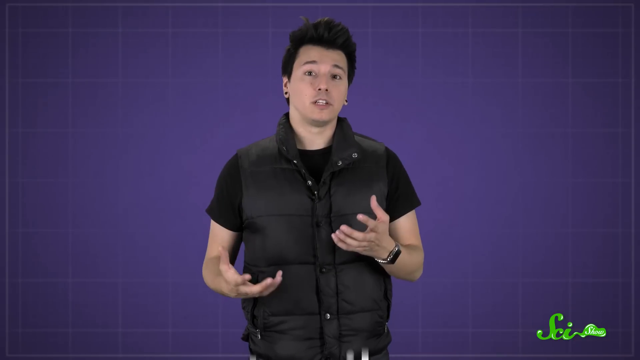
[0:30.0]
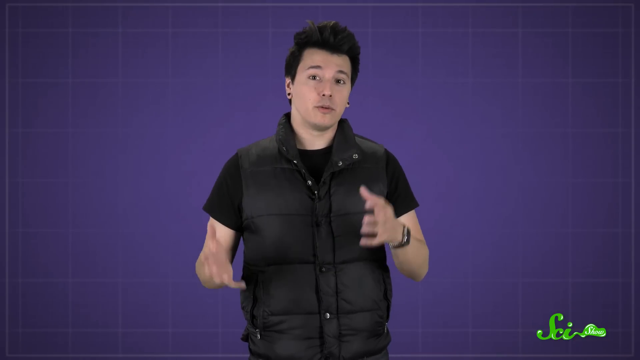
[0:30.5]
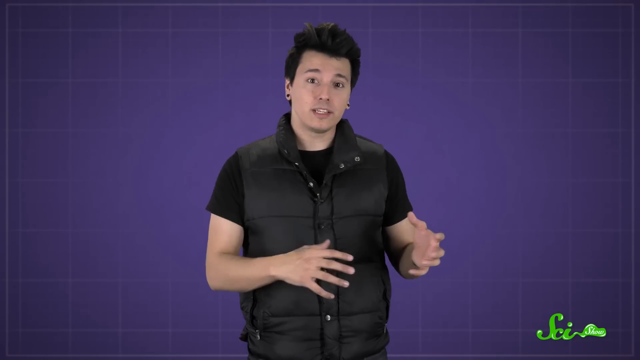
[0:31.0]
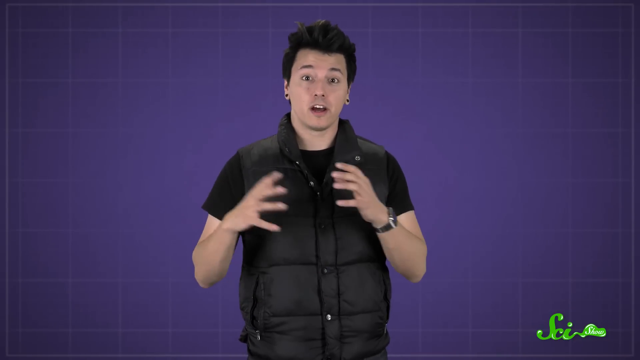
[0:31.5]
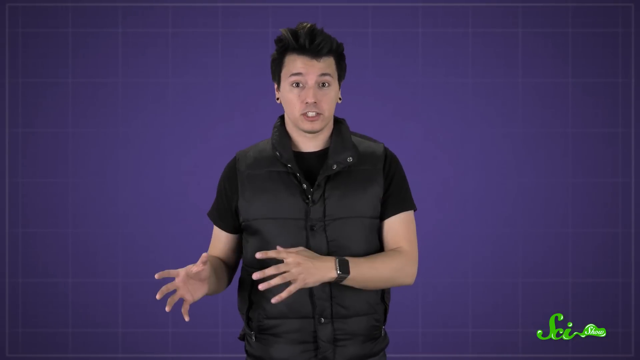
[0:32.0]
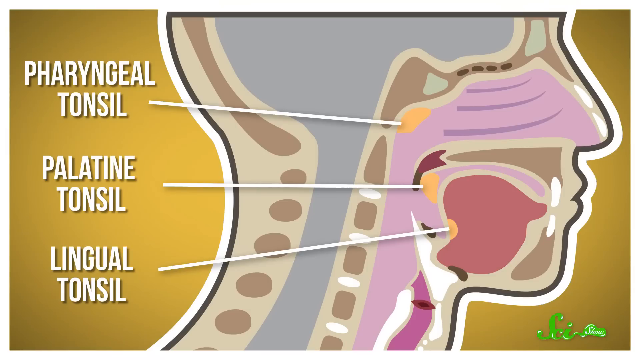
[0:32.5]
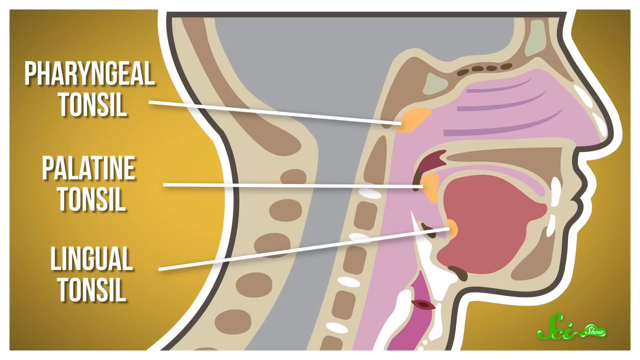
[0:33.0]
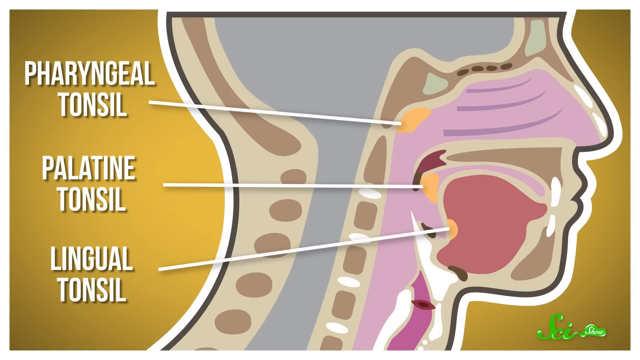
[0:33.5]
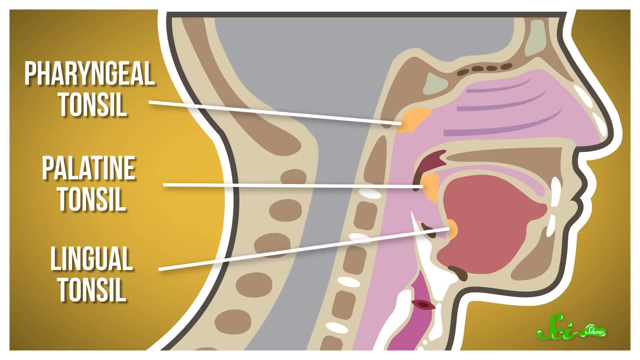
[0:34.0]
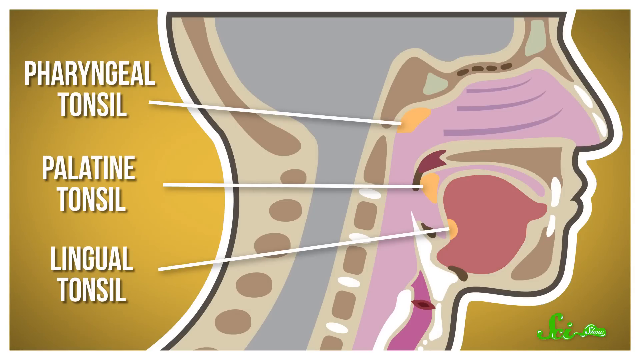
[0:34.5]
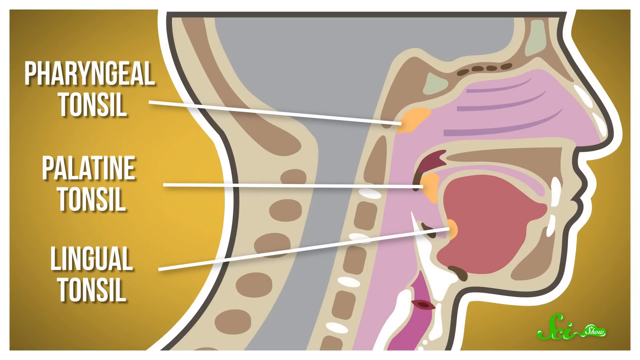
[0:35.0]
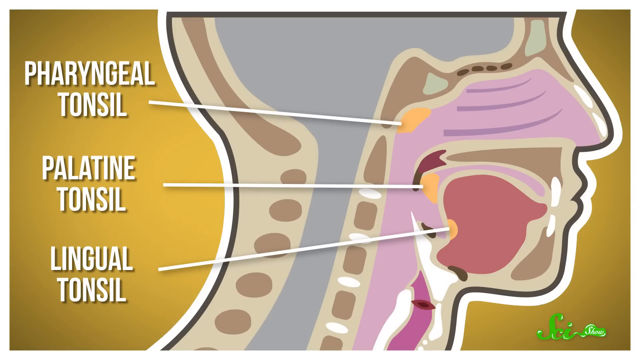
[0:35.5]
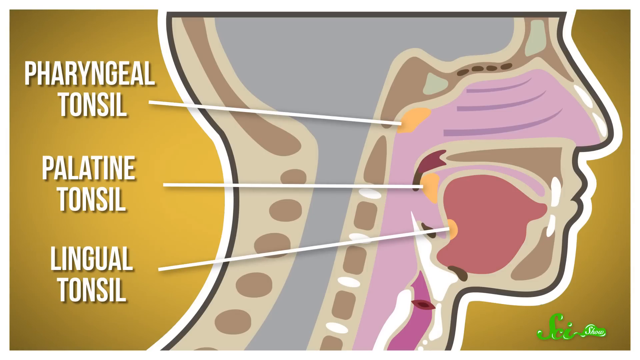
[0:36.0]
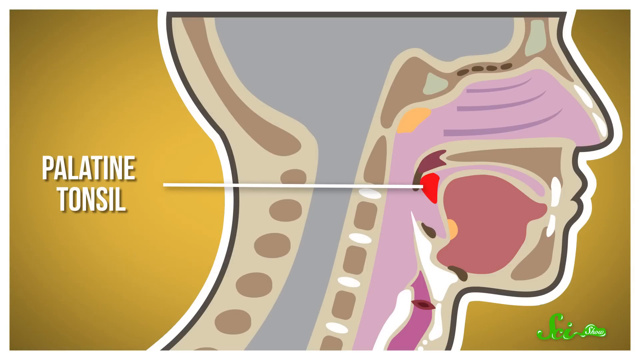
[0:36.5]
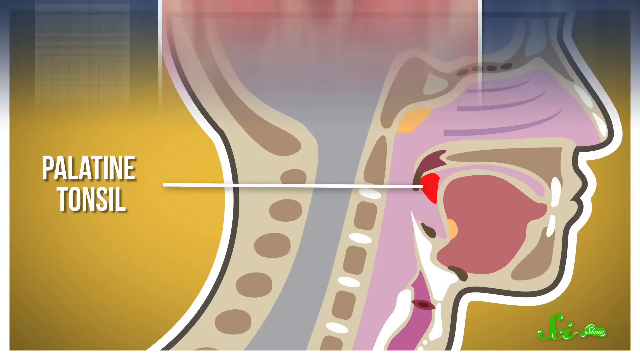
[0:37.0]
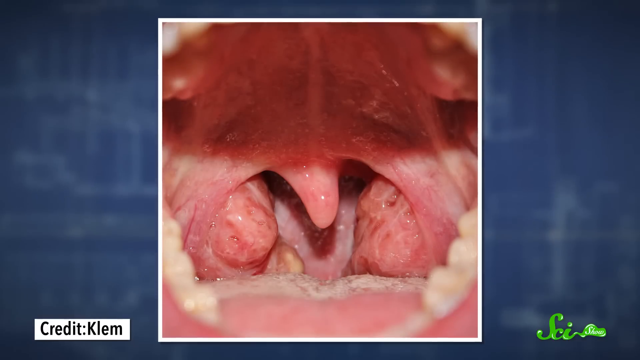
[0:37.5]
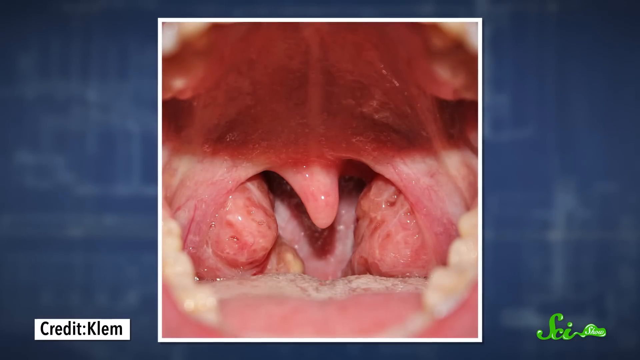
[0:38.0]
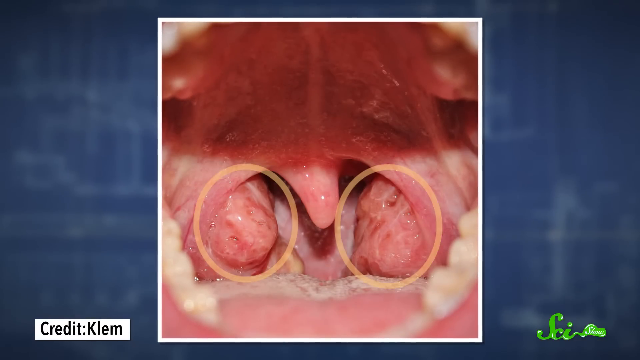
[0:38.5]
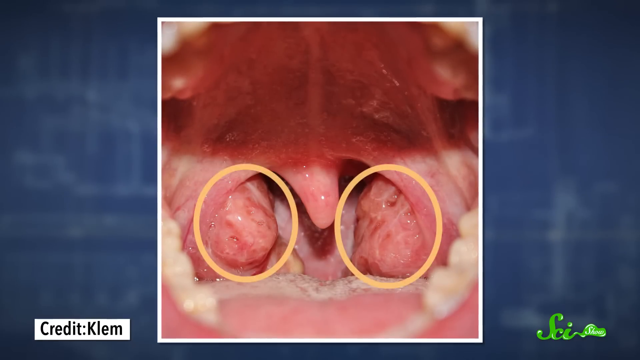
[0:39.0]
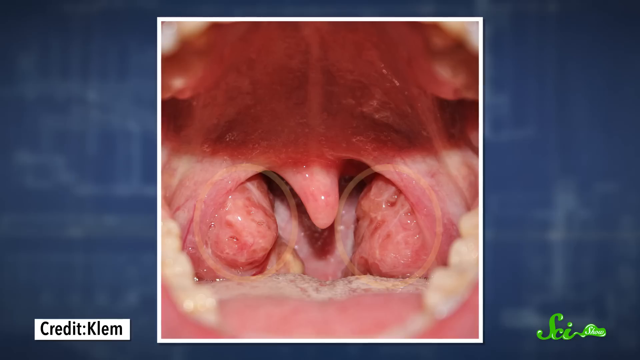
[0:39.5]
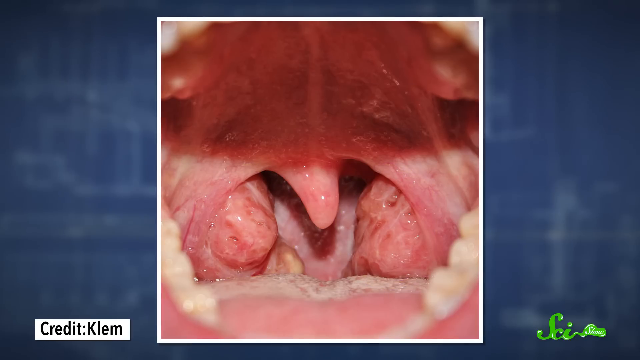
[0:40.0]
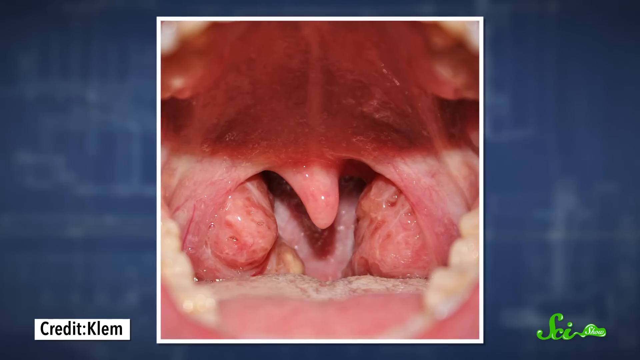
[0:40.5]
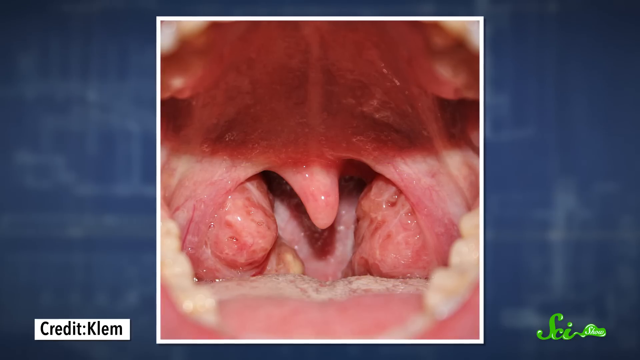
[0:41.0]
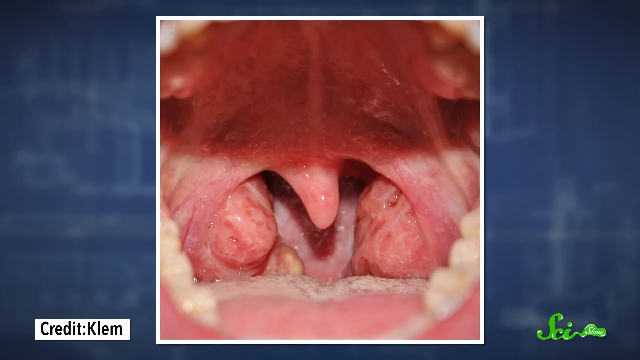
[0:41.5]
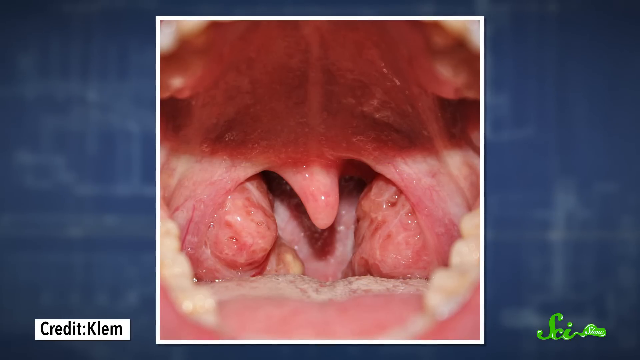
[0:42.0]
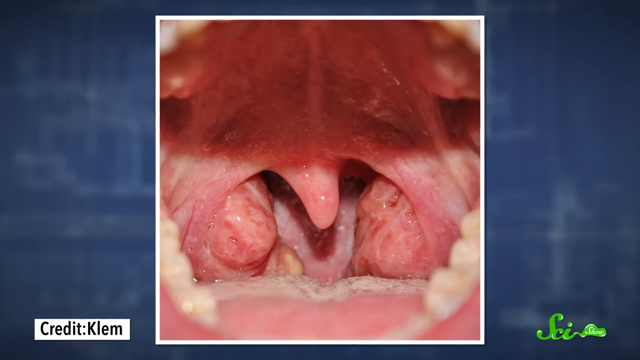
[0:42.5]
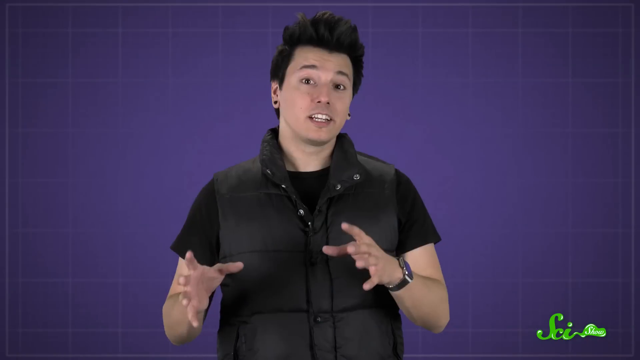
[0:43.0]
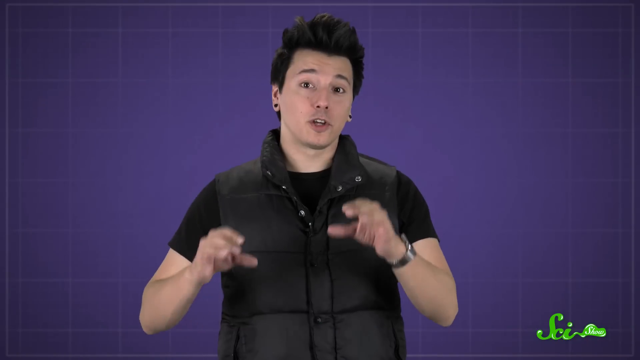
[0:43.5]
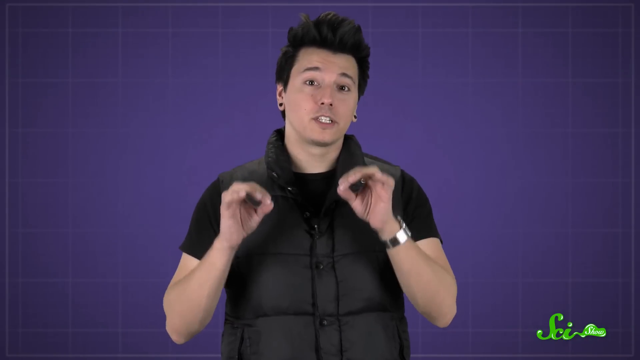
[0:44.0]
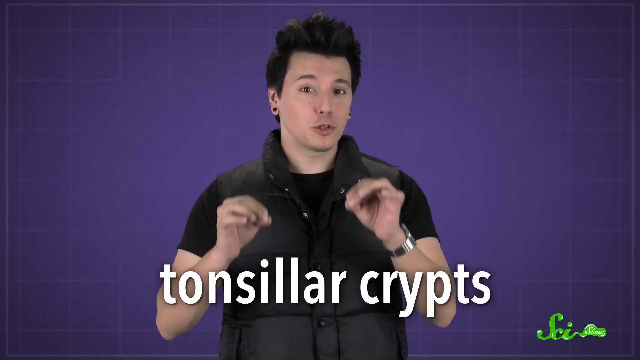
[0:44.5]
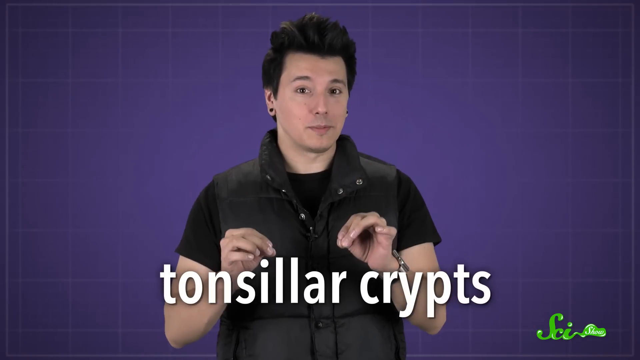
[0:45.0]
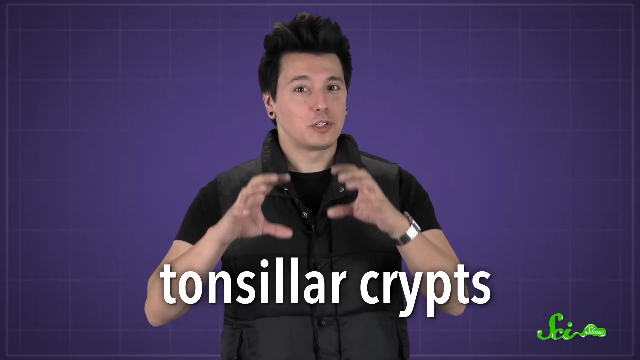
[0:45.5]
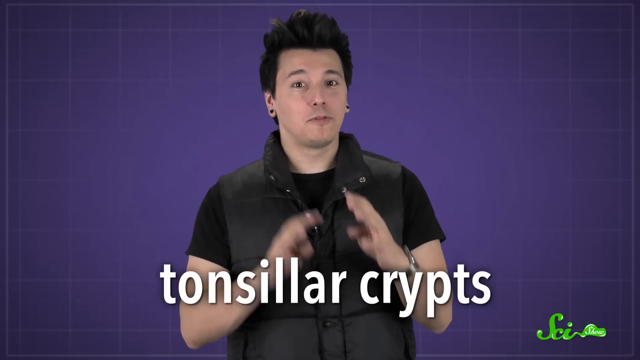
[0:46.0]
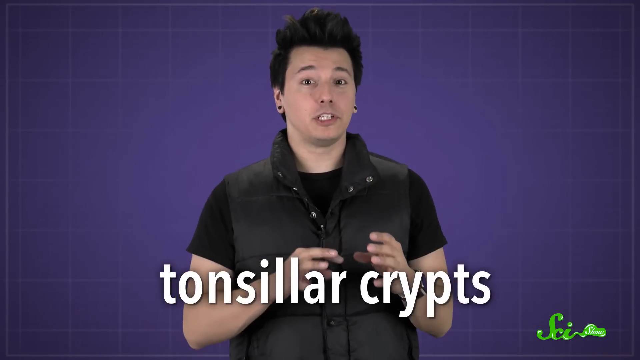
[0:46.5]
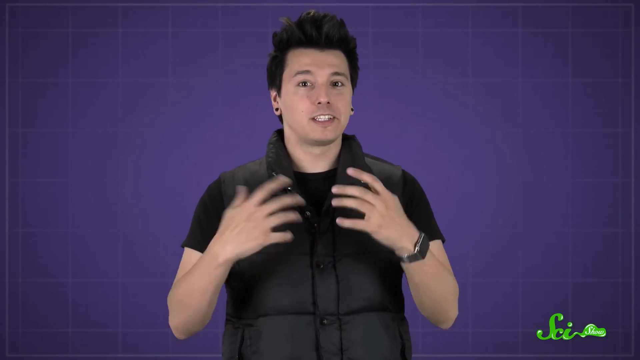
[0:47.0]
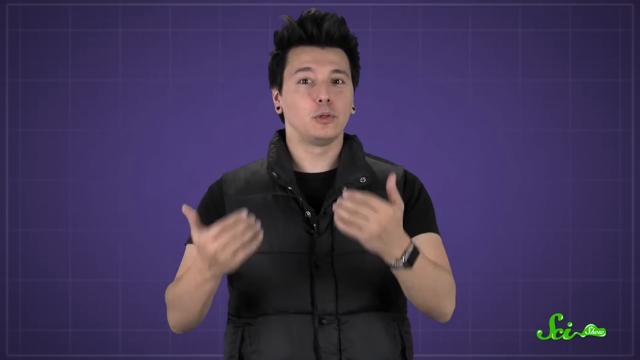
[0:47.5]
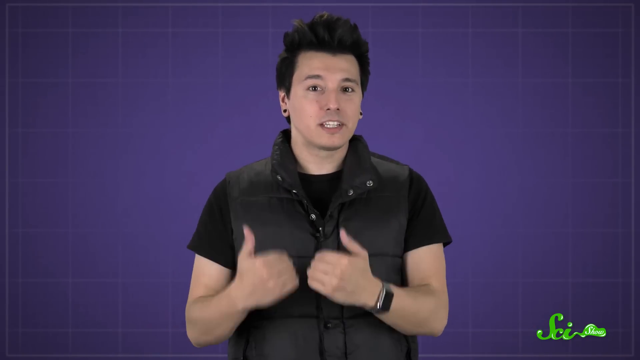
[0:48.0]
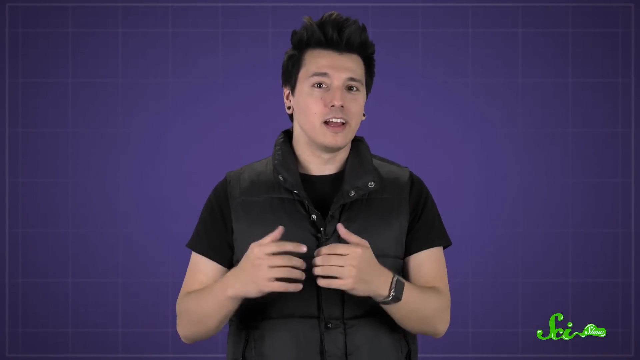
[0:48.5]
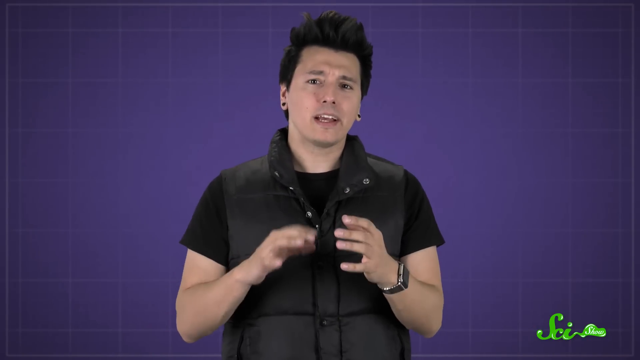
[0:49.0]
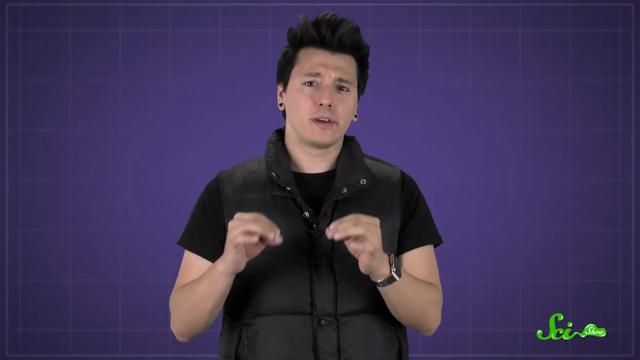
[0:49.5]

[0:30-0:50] A man in a black t-shirt and black vest is on screen, with text labels including "pharyngeal tonsil" and "palatine tonsil" showing three different types of tonsils in the mouth area. He uses many hand movements and gestures. The background is purple with a checkered pattern.